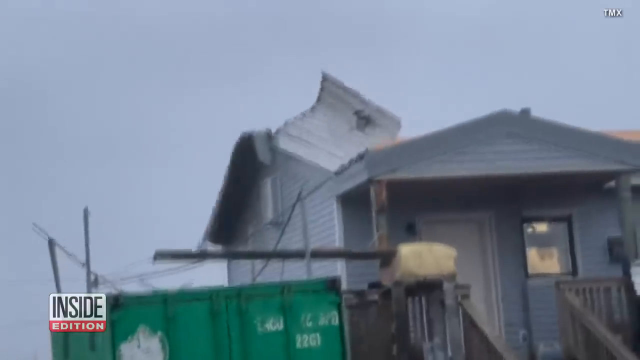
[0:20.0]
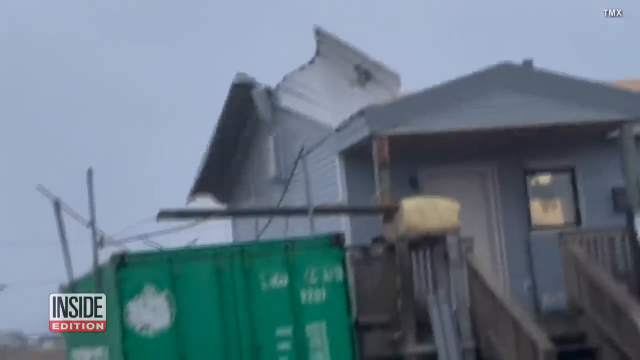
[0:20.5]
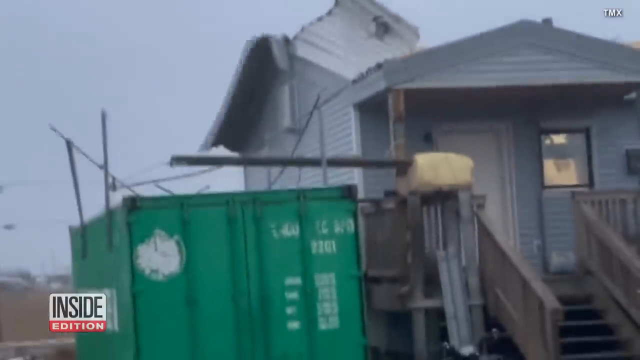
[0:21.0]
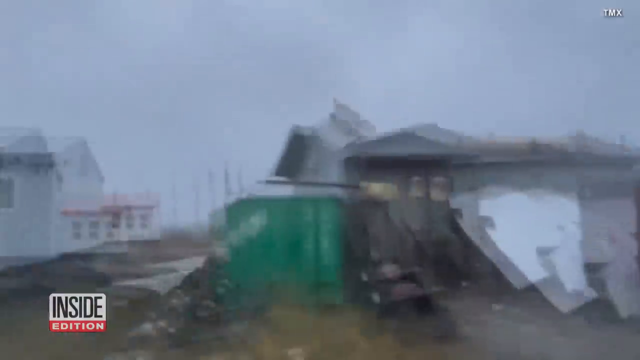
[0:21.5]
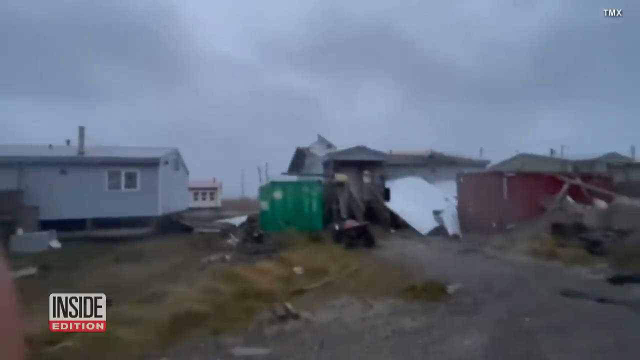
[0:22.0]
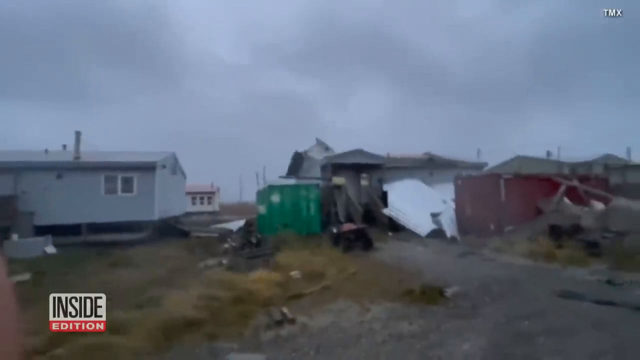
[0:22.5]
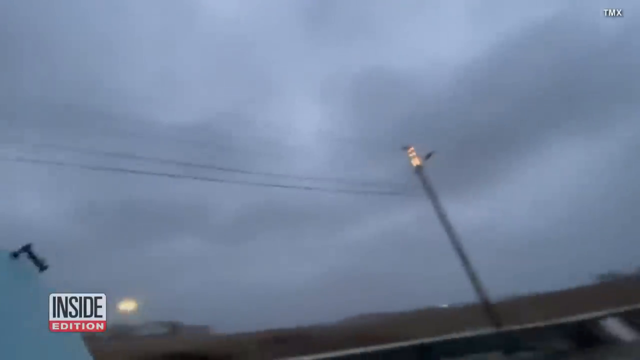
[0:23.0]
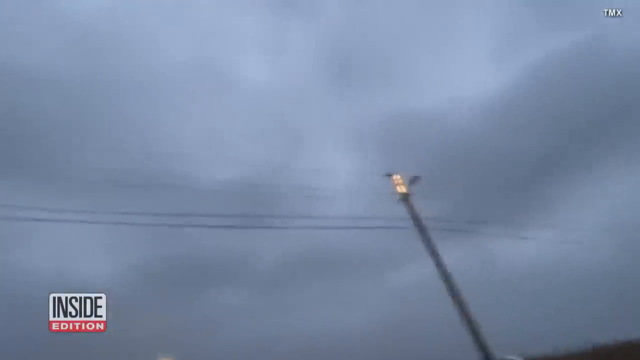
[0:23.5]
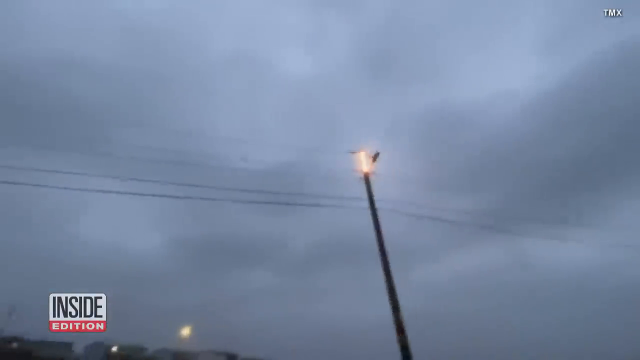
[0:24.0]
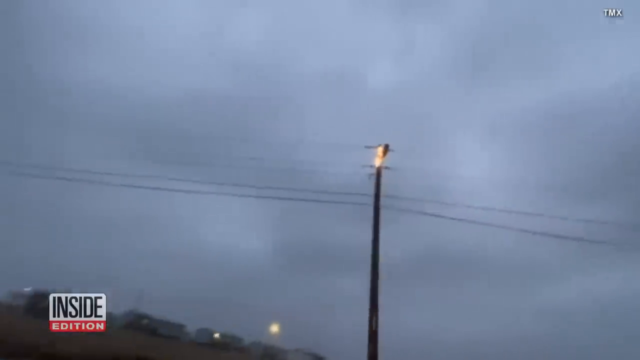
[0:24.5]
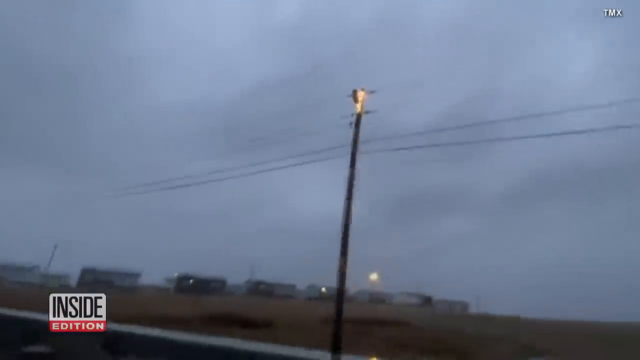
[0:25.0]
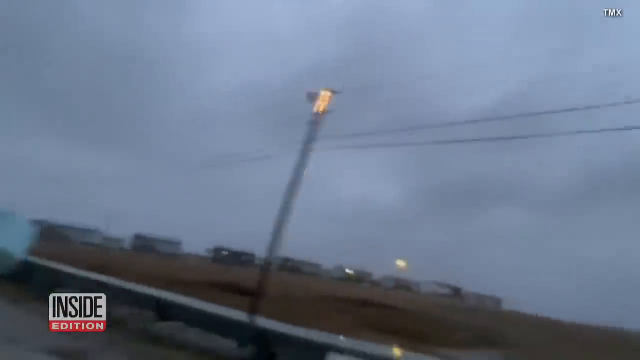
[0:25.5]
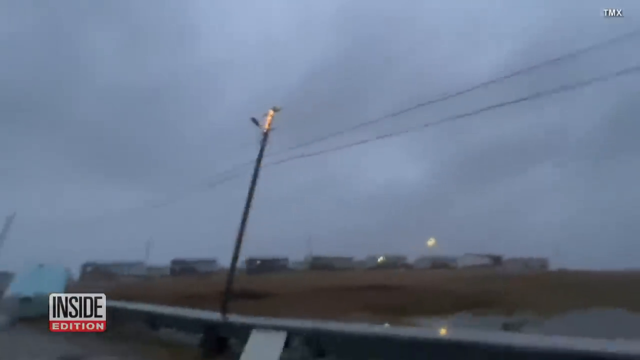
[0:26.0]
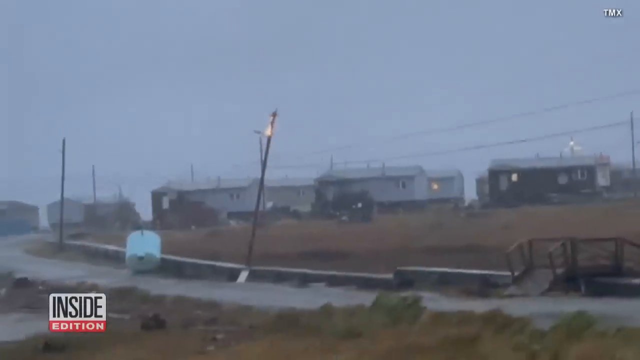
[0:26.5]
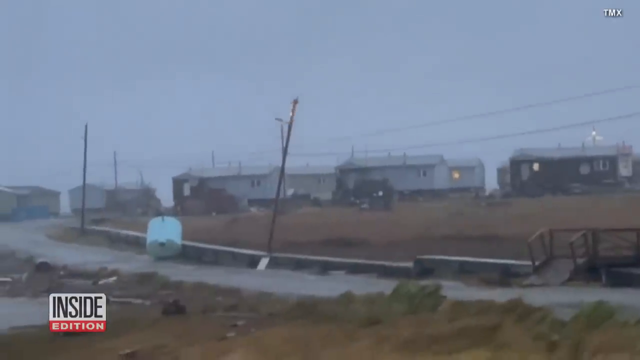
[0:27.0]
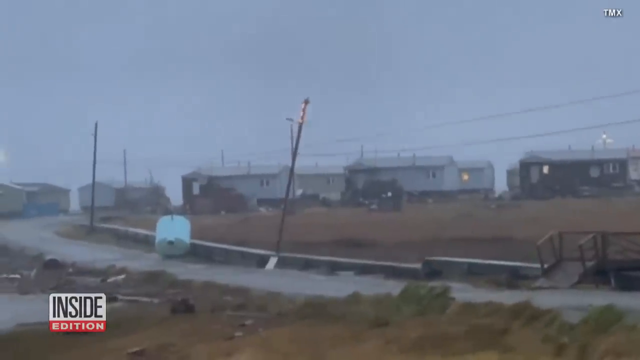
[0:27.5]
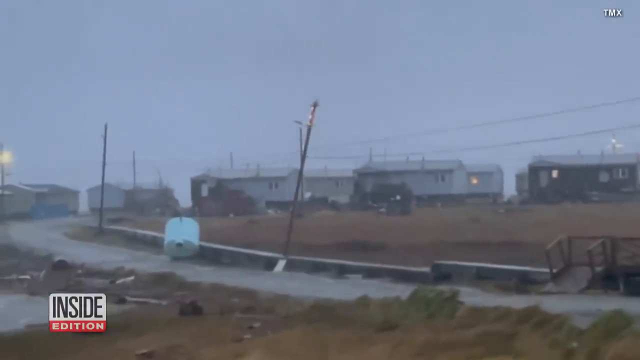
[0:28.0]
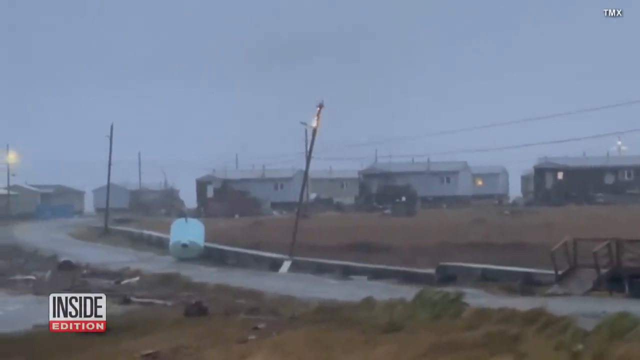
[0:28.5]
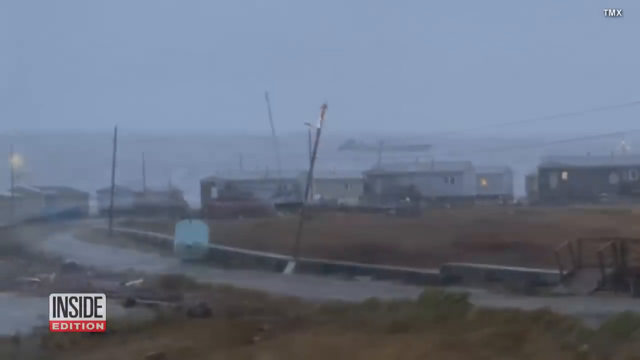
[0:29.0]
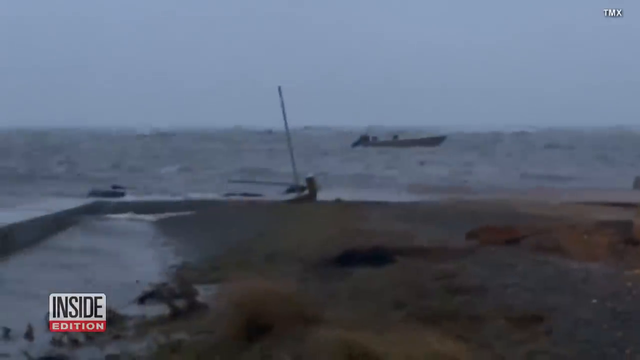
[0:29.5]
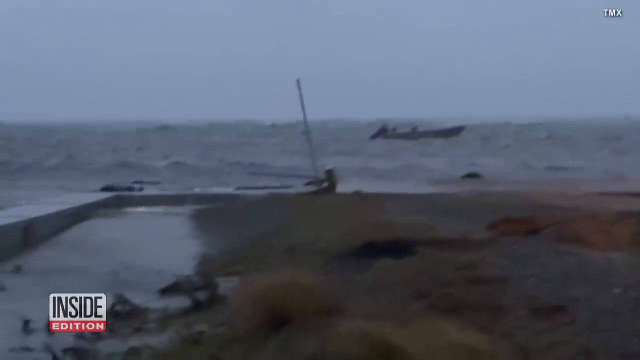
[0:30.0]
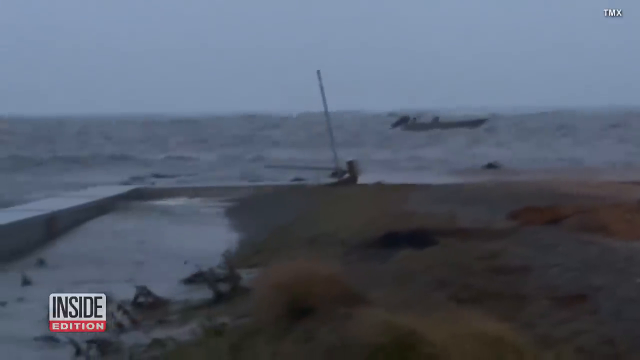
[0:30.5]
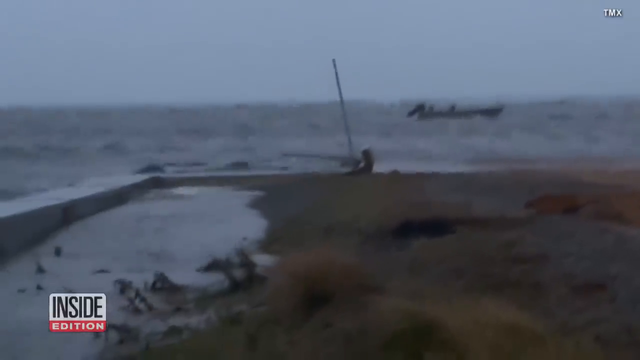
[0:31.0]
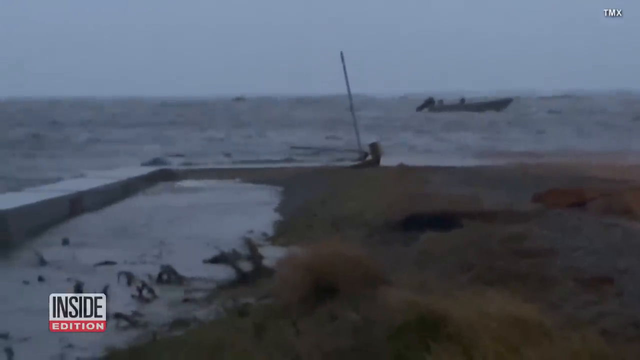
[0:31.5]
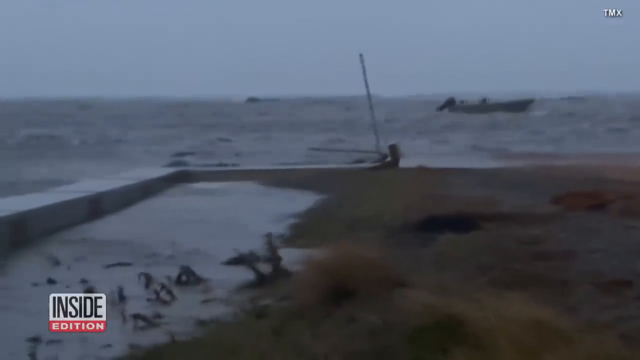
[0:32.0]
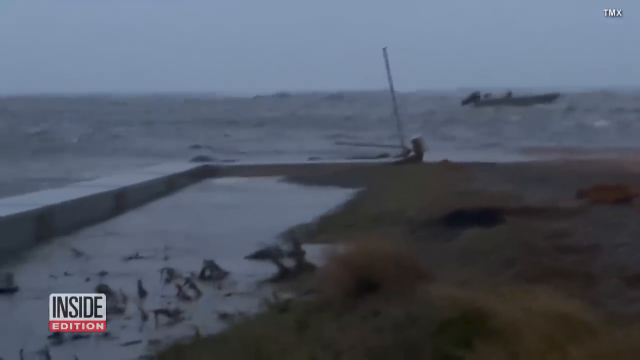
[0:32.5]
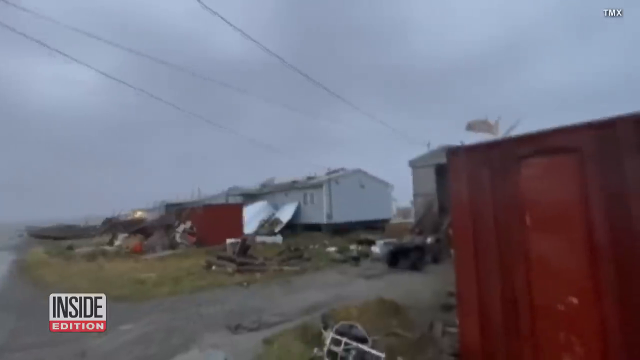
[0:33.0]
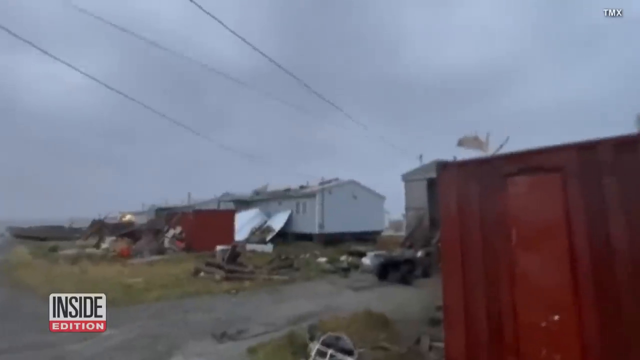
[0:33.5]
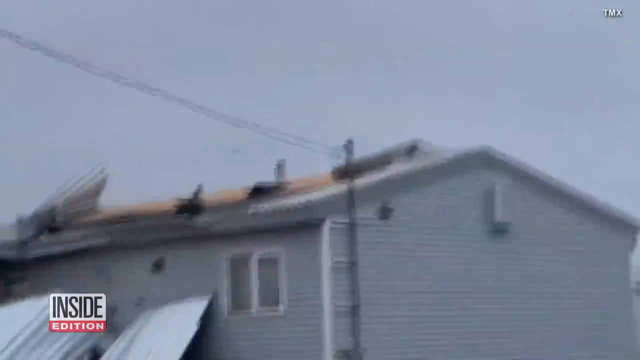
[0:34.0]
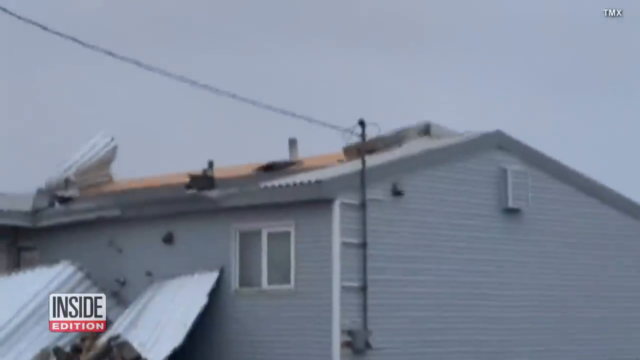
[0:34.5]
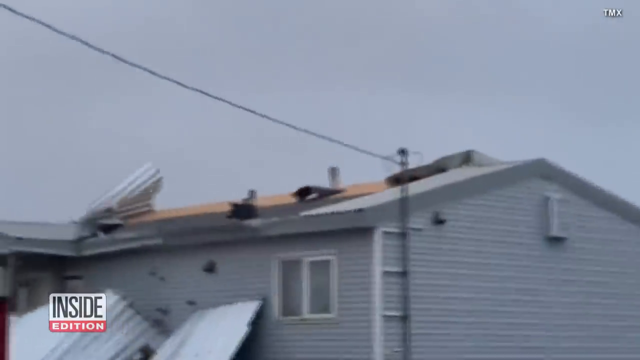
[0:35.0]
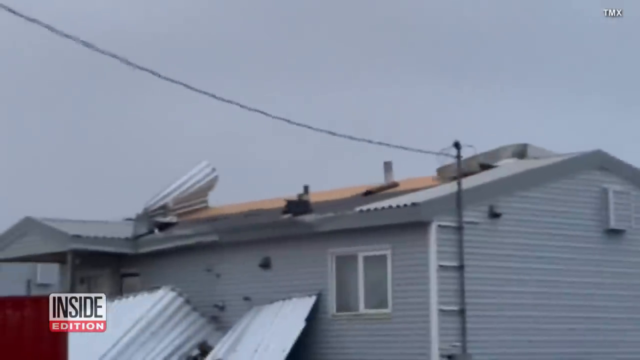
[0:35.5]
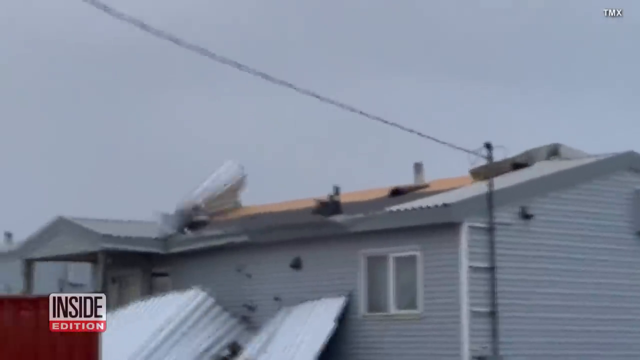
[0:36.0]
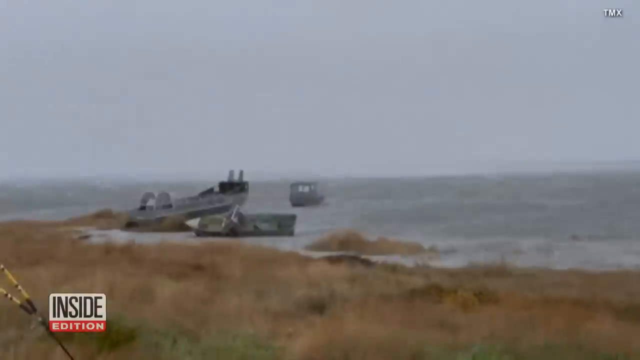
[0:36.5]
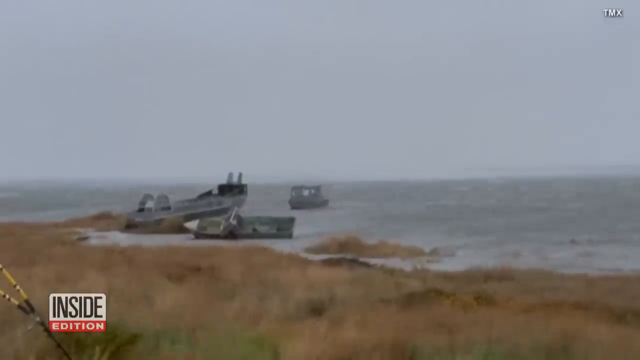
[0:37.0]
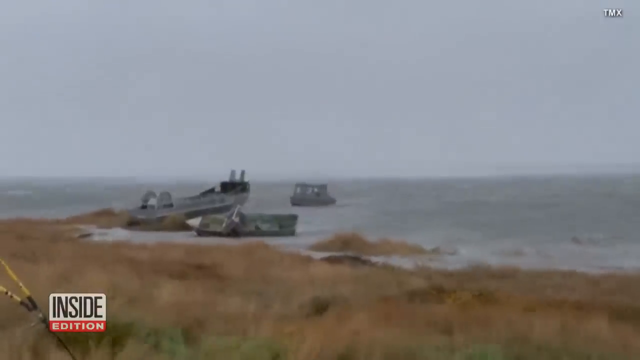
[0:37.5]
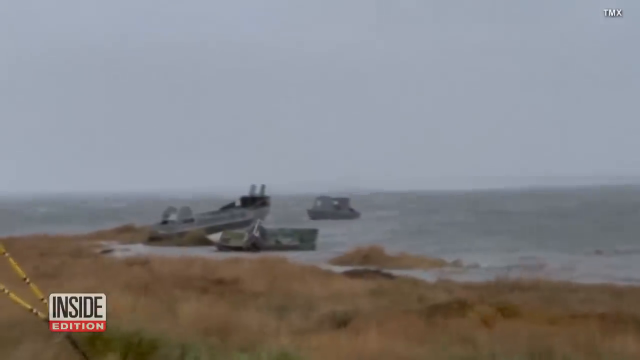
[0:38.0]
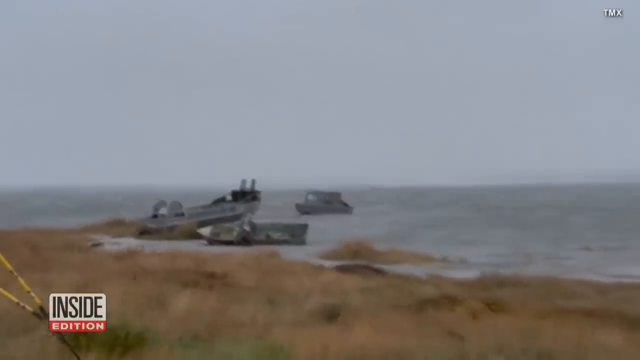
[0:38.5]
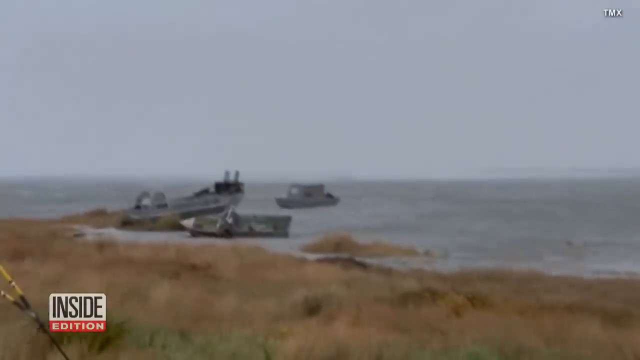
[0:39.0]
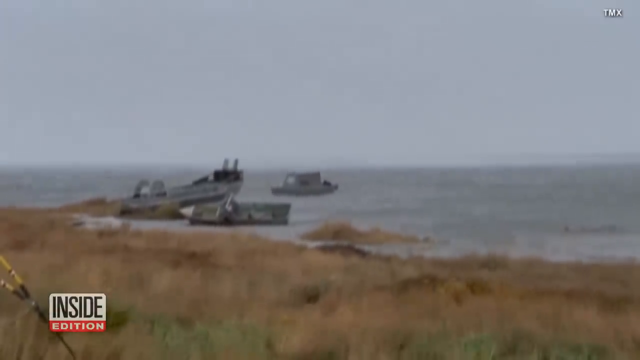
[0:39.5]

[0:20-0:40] The camera immediately zooms out to further show the storm's destruction: many buildings are destroyed and rubble has collapsed over the road. Several houses are visible to the left, center, and right. One house to the middle left and a white-red house in the background seem to be relatively intact, but the middle buildings have clearly been destroyed. What appears to be an ATV or some other type of small vehicle is parked near the middle of the road in front of the wreckage. A transition shows roads from a different angle, with more debris and downed and otherwise damaged power lines; some of the lights appear to be blinking or sparking due to damage. Another transition shows the open body of water that has overtaken much of the land, with a boat in the distance near the upper right corner.